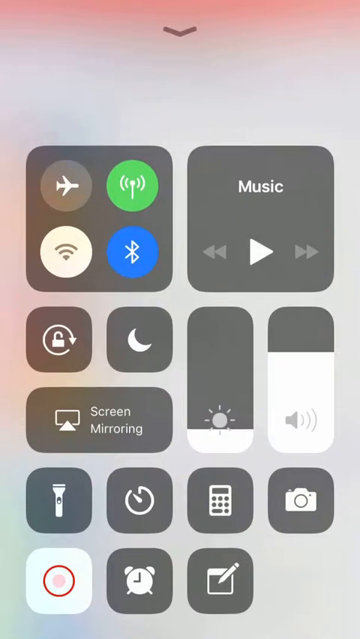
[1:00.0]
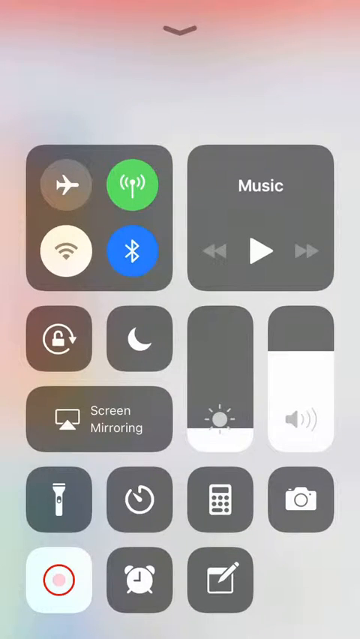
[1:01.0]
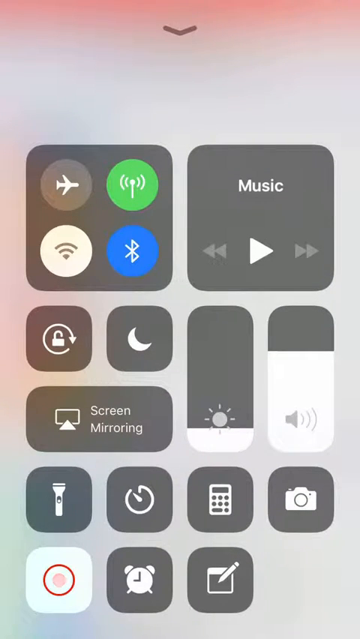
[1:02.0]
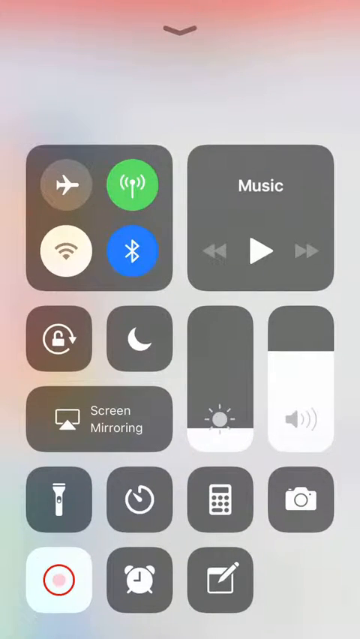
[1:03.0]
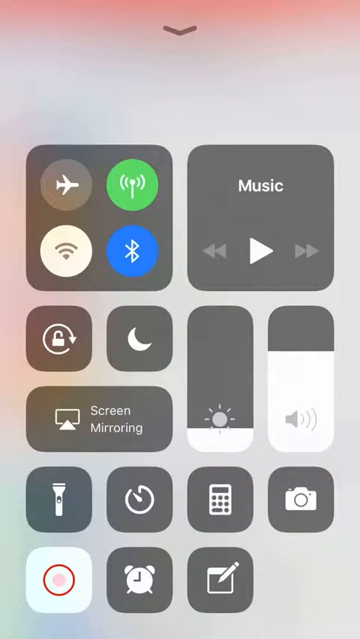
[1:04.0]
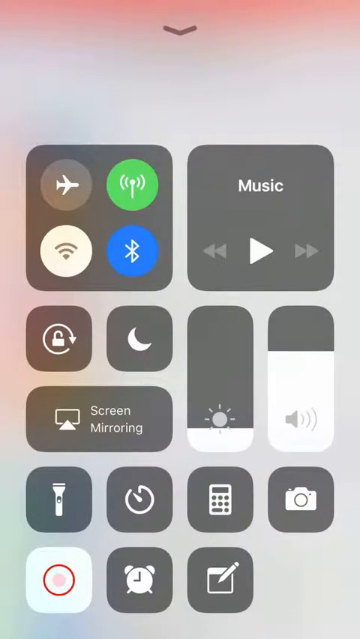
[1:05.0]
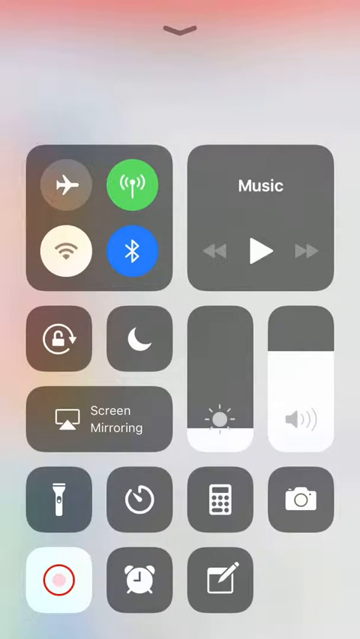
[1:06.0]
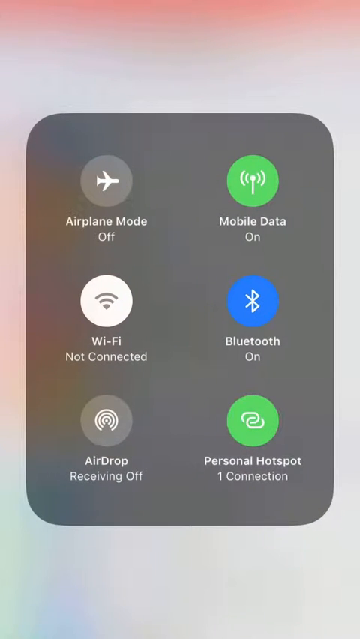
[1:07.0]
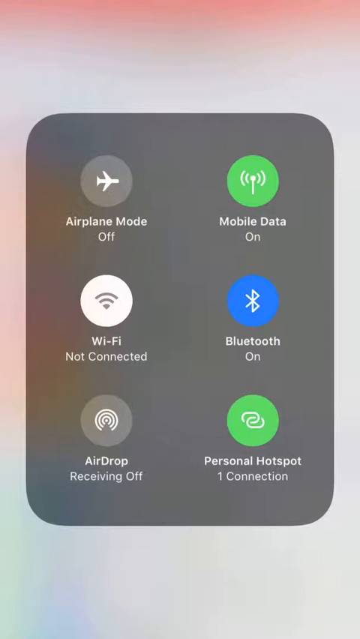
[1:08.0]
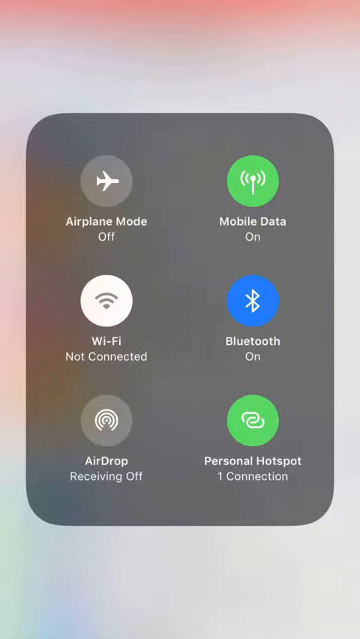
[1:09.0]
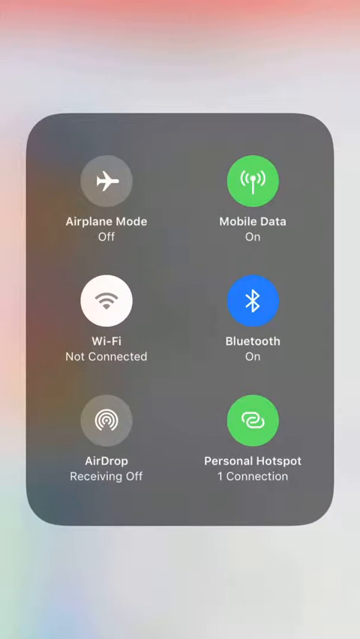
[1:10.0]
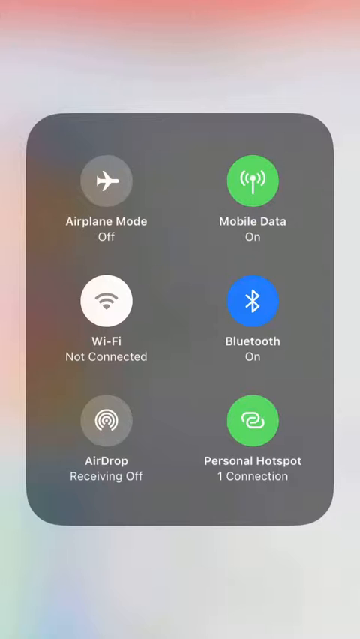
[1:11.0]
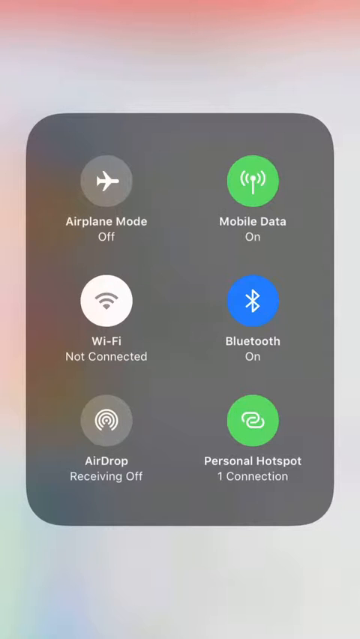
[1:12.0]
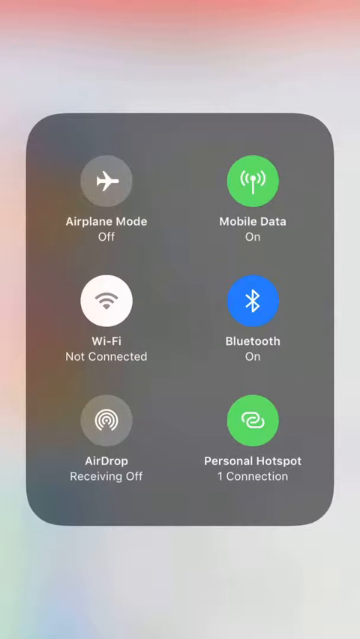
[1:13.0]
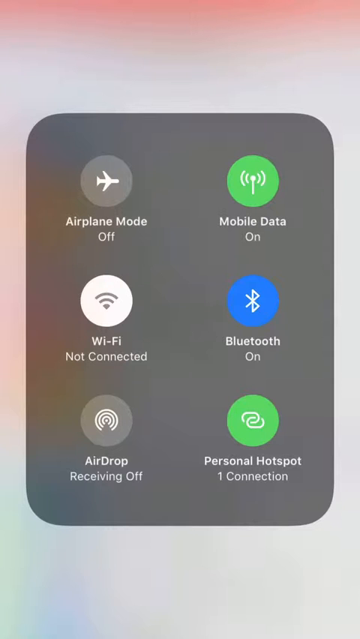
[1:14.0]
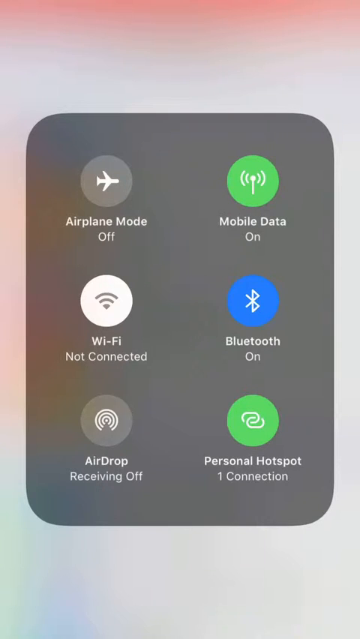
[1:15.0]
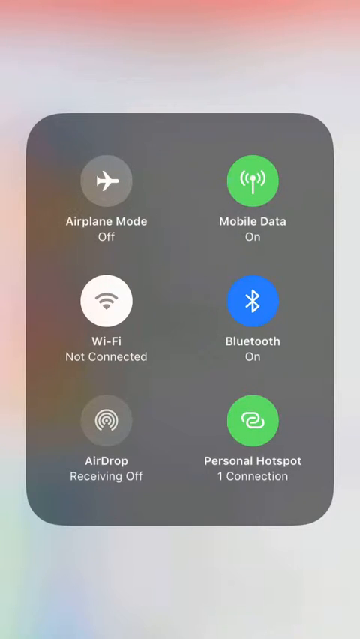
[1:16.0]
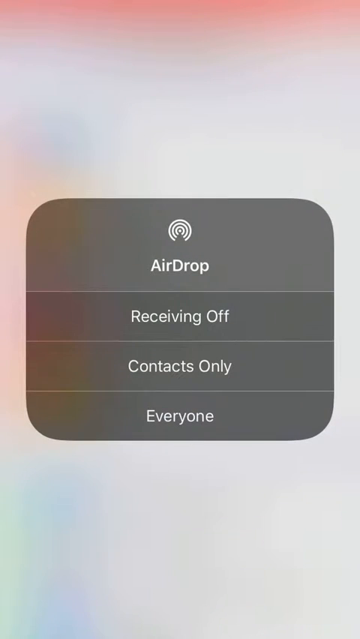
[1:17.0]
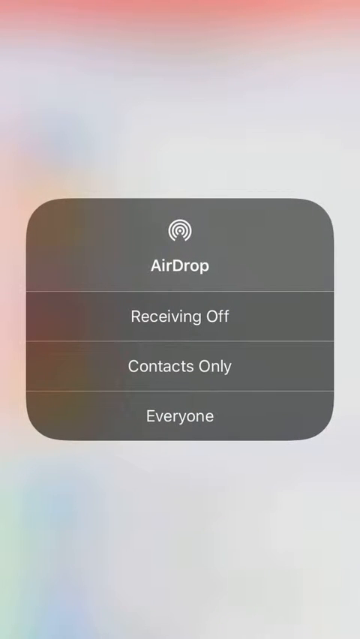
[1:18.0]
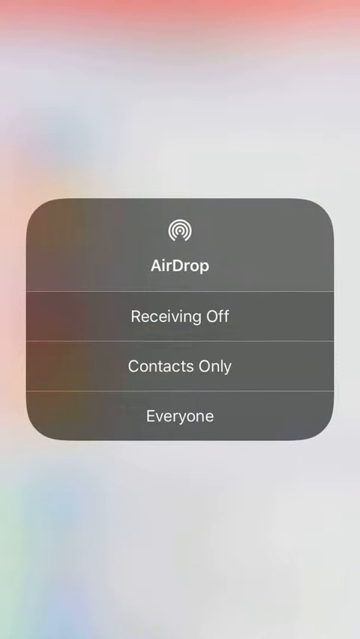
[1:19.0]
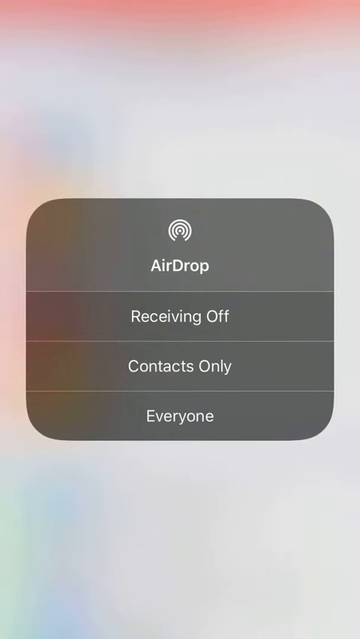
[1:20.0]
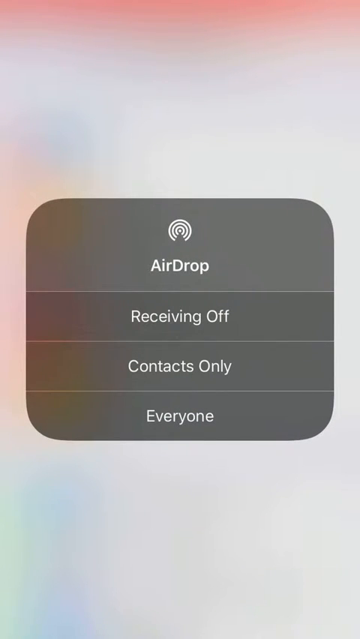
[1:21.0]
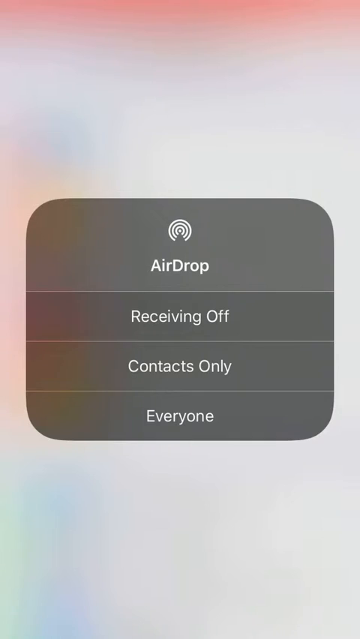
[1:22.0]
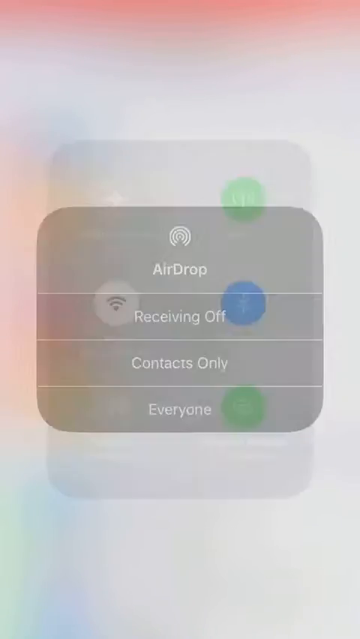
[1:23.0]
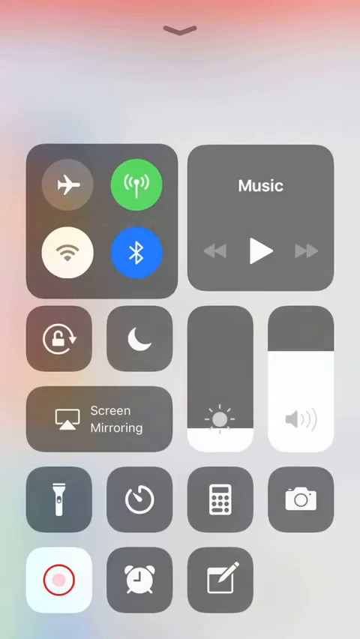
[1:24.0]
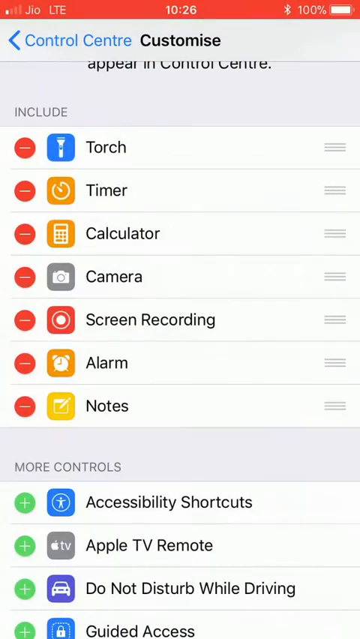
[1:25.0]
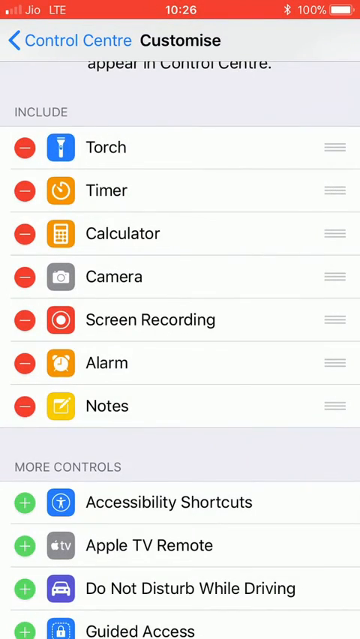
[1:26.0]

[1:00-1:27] He is on his start screen, with music on the right-hand side and airplane mode in the upper left. He scrolls up to airplane mode, mobile data, Bluetooth on, Wi-Fi not connected, AirDrop receiving off and personal hotspot with one connection. Then AirDrop options appear: receiving off, contacts only and everyone. The view goes back to airplane mode and then back to his main screen. Airplane mode is gray; there is a green emblem, a blue emblem for Bluetooth, and a white sound emblem. The music section is in white with a play button in the middle and gray forward and backward arrow buttons. He seems to just be showing the apps on his phone.